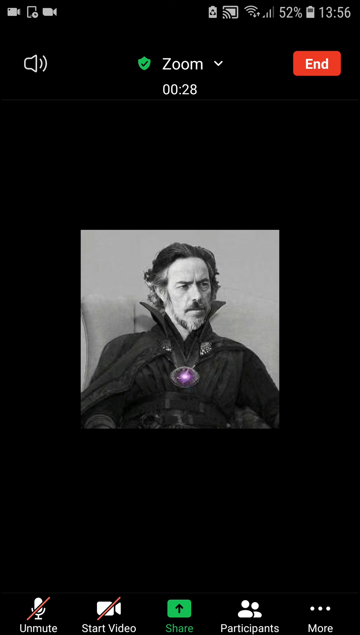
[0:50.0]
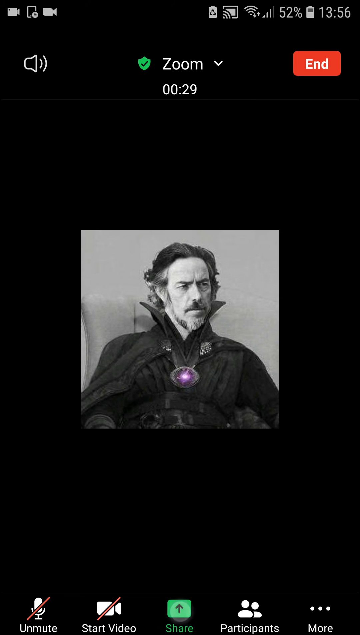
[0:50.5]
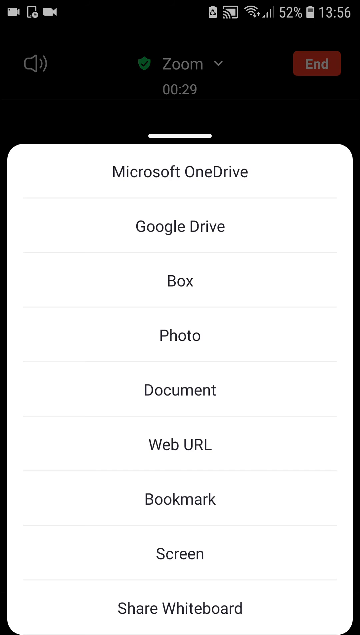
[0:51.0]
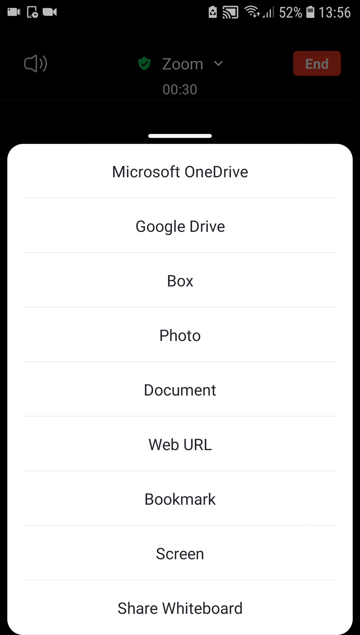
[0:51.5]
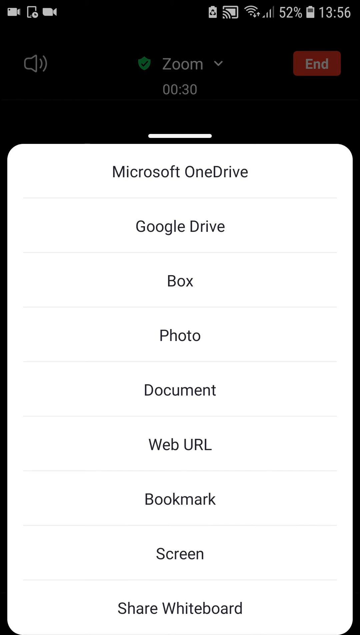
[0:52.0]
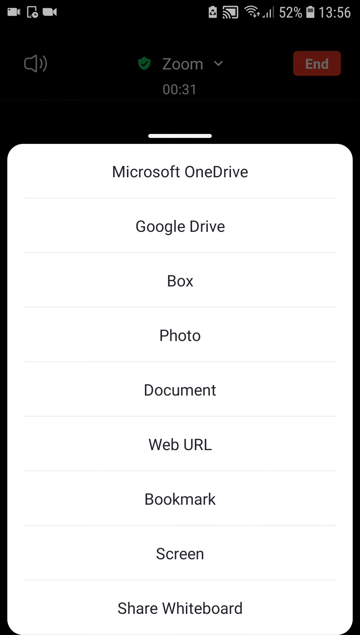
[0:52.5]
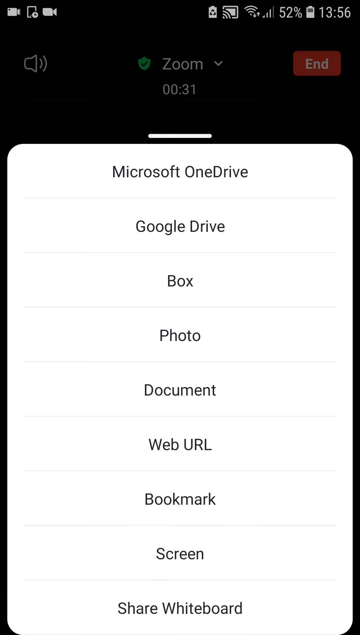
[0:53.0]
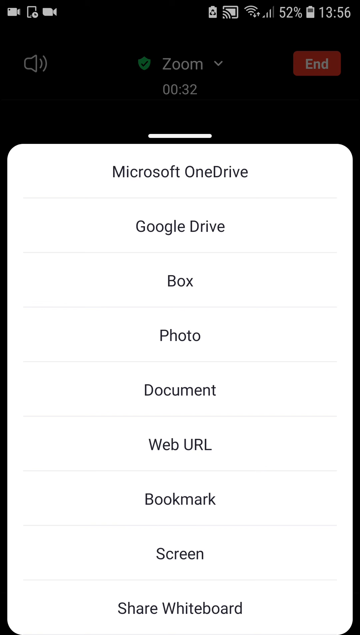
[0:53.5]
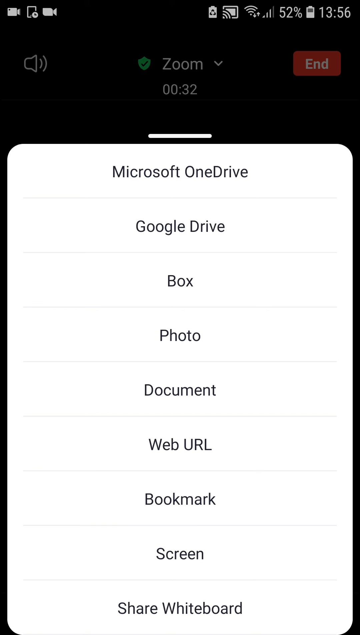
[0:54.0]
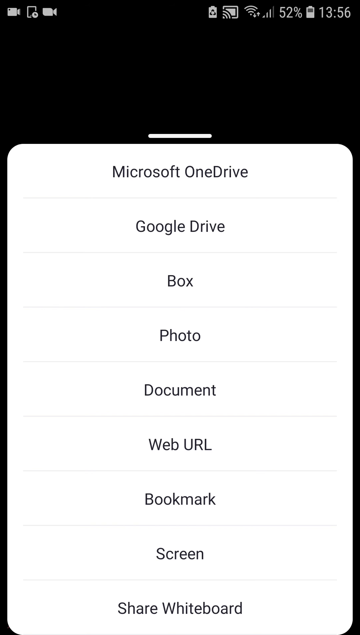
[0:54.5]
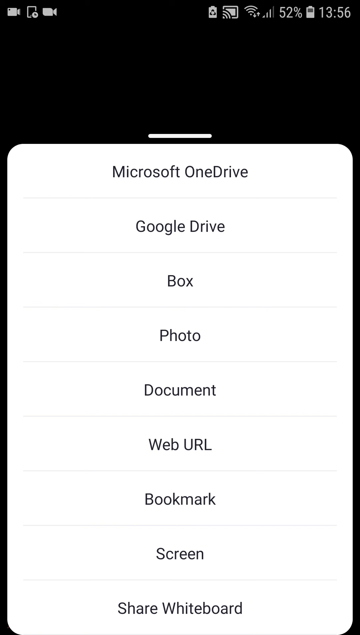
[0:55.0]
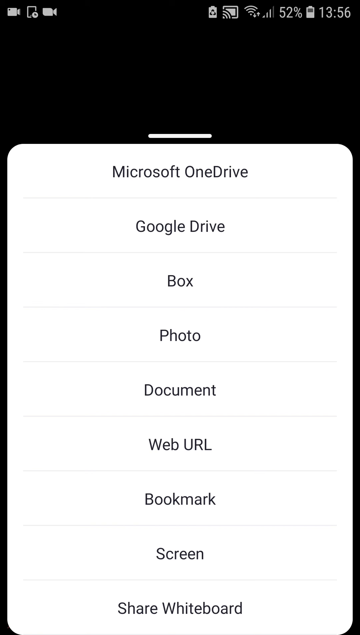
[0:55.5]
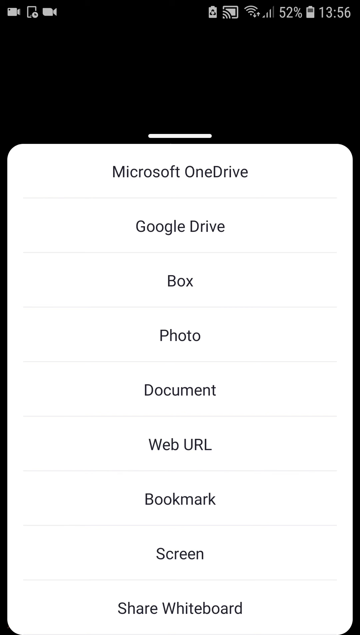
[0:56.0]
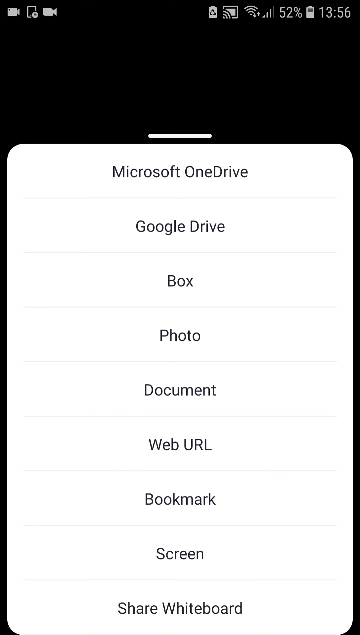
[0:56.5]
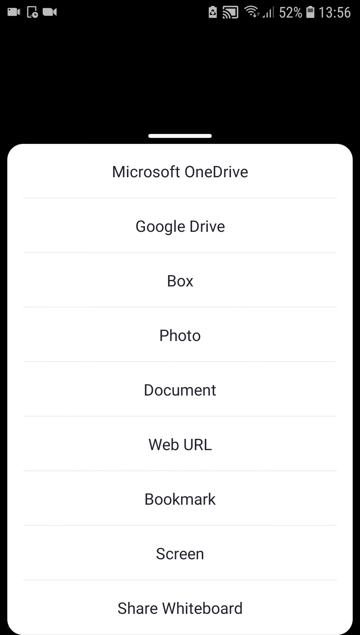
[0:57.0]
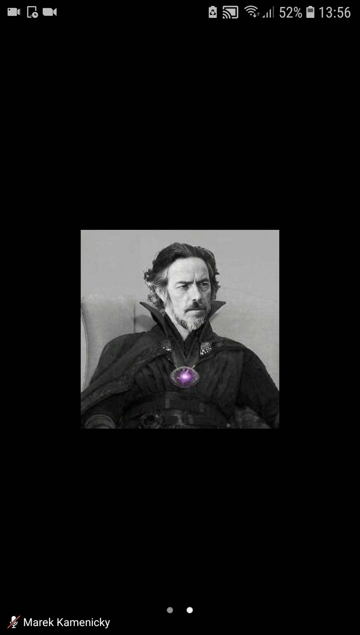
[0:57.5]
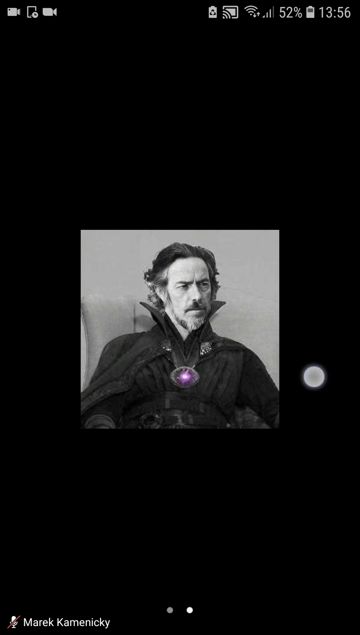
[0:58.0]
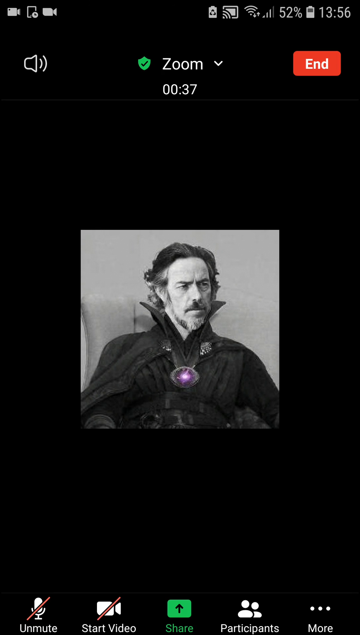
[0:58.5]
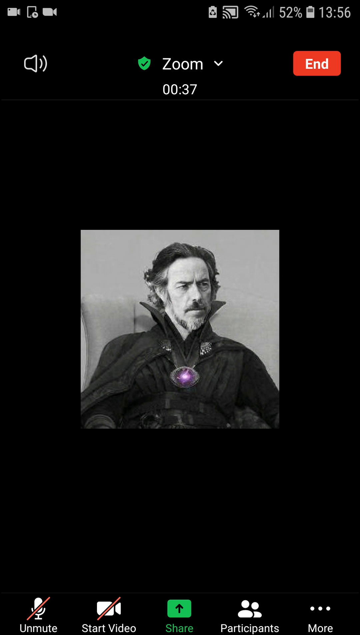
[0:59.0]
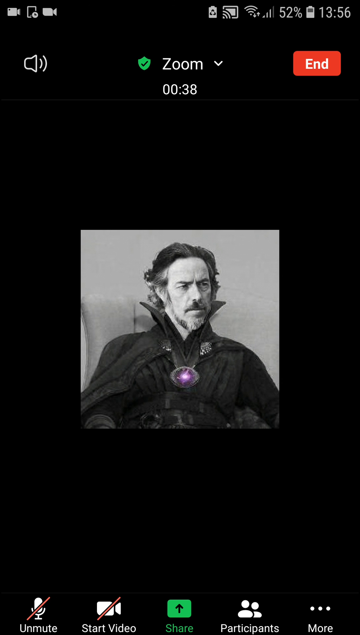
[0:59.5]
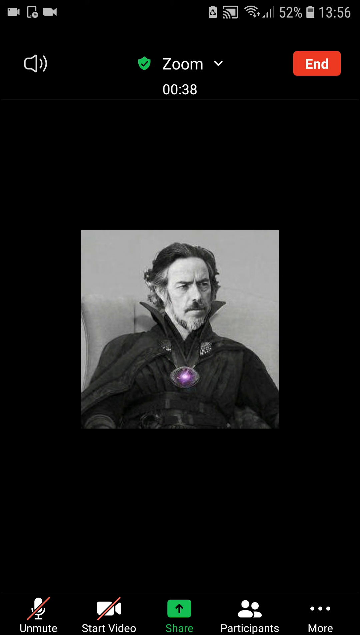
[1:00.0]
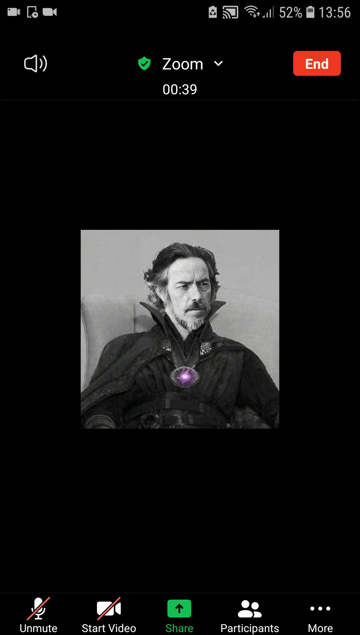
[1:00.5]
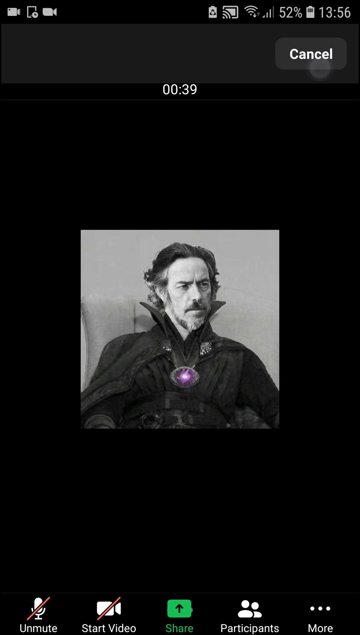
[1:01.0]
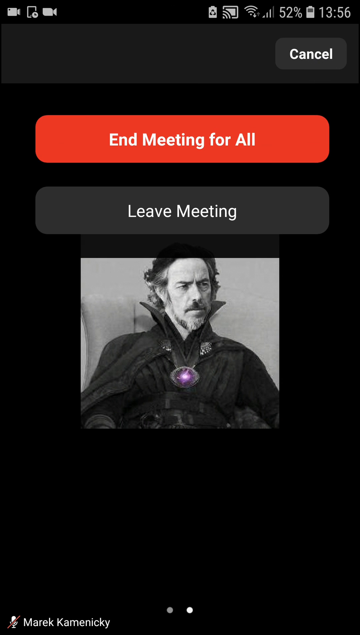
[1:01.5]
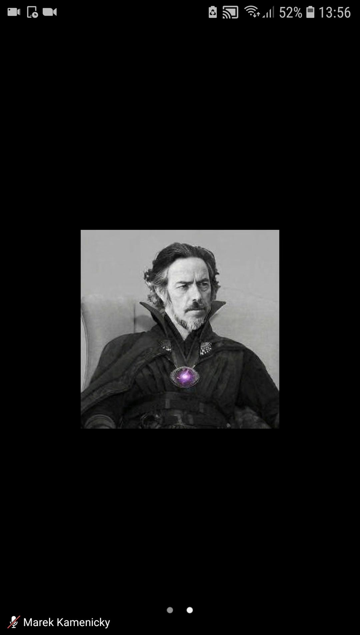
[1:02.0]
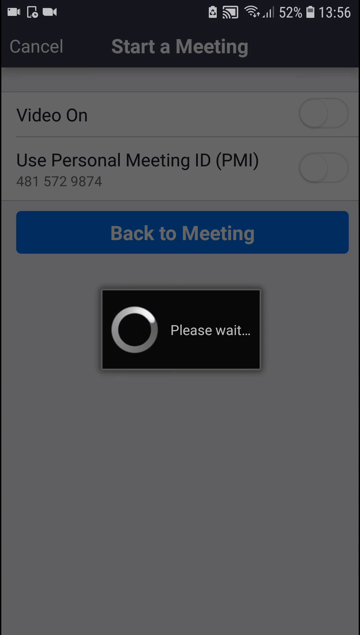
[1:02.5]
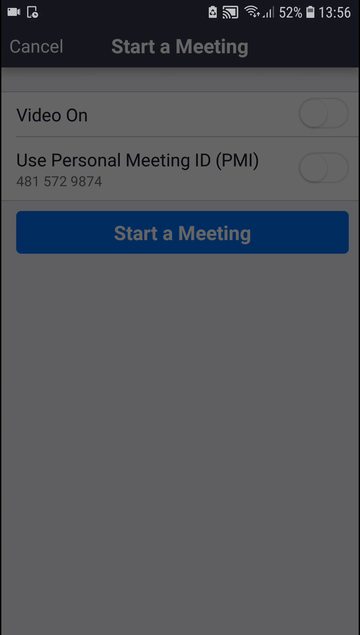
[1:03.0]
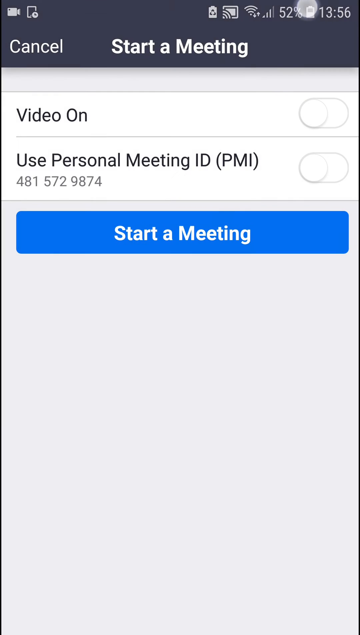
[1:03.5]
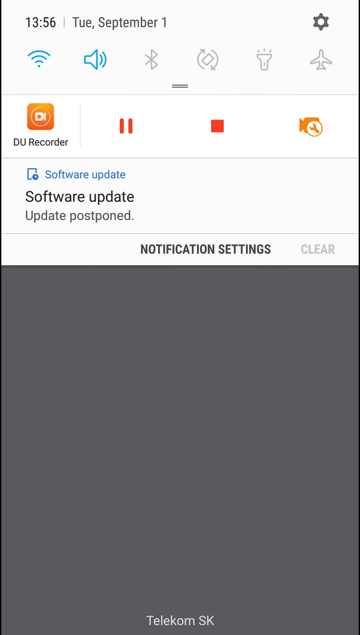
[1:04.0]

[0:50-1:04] He taps a link and a list appears reading "Microsoft OneDrive, Google Drive, Box, Photo, Document, Web URL, Bookmark, Screen, and Share Whiteboard", in black text on a white background with a light gray line between each item, inside a rectangle. The Zoom call is still ongoing, with a sound button, a timer counting up, and an end button in a red rectangle. He ends the meeting and then apparently taps the phone's menu, which shows a software update. The menu is white, and the picture of the man in fantasy clothes with a white beard and a purple necklace is shown.